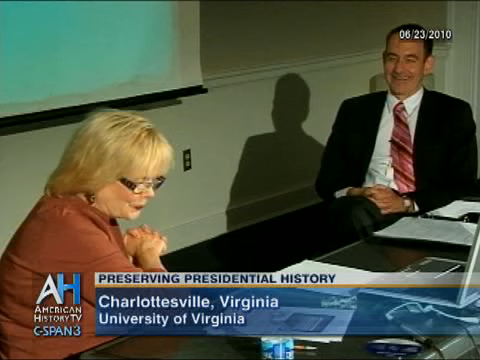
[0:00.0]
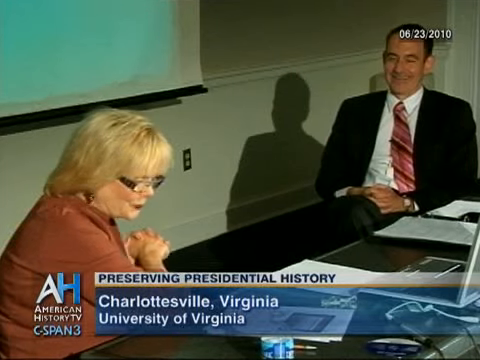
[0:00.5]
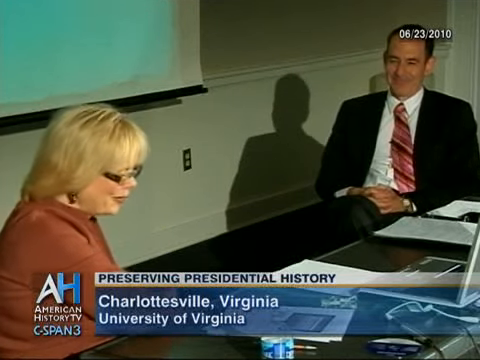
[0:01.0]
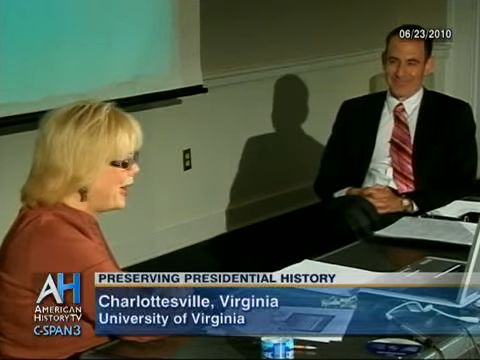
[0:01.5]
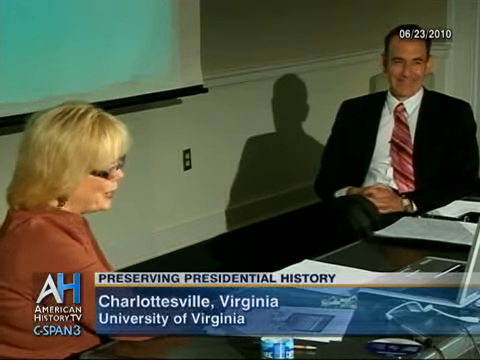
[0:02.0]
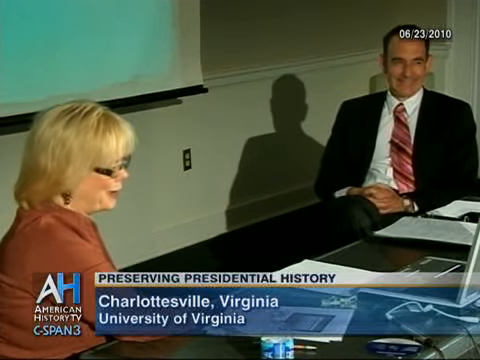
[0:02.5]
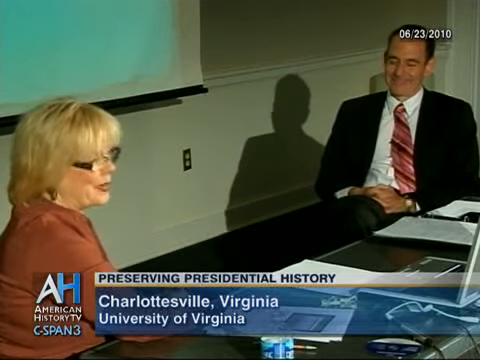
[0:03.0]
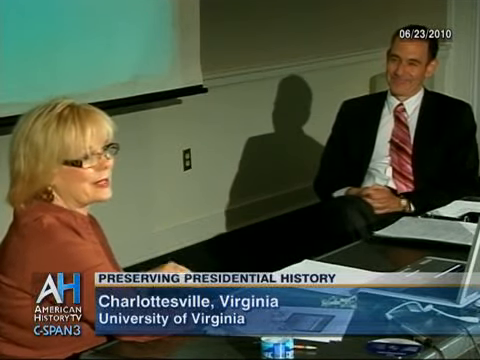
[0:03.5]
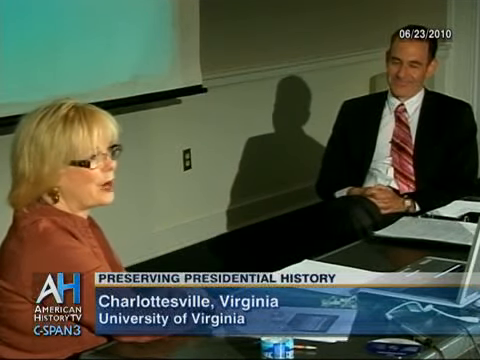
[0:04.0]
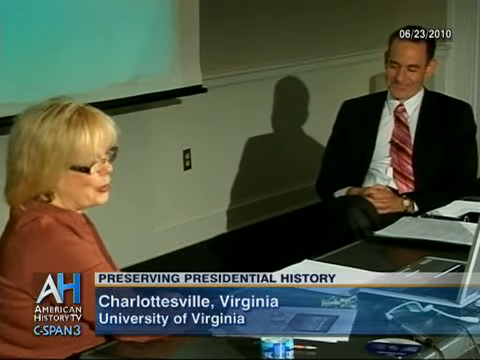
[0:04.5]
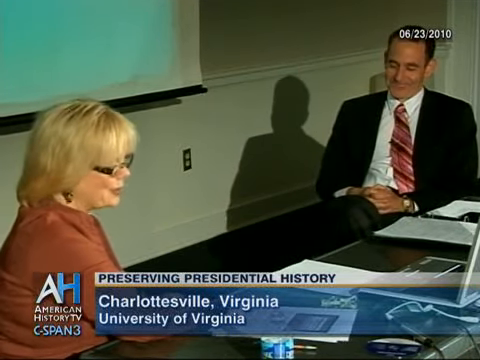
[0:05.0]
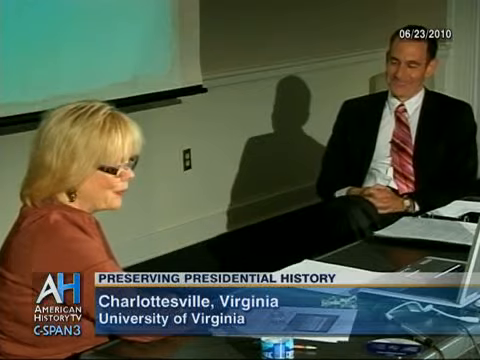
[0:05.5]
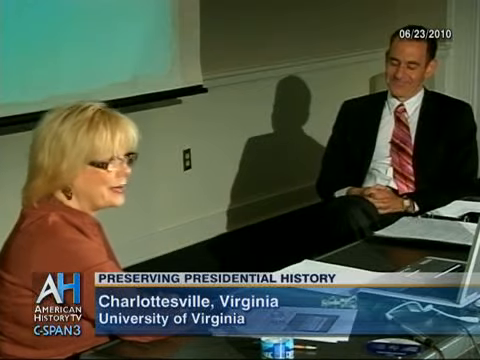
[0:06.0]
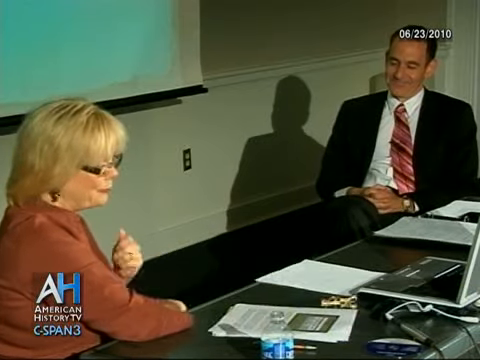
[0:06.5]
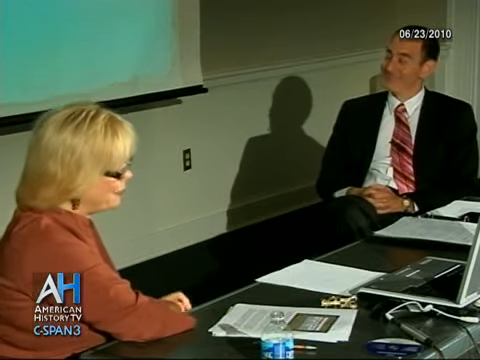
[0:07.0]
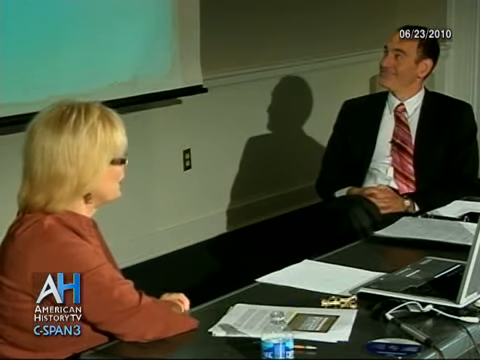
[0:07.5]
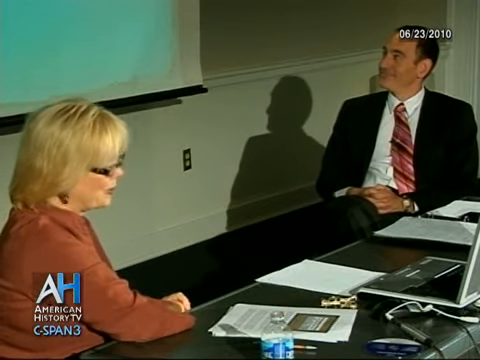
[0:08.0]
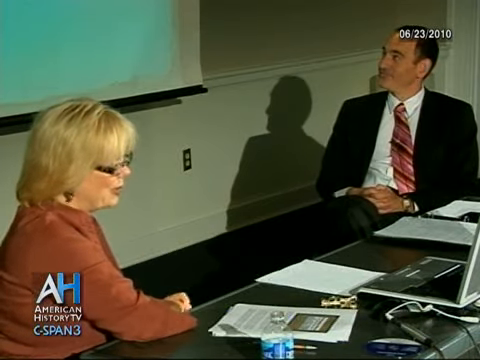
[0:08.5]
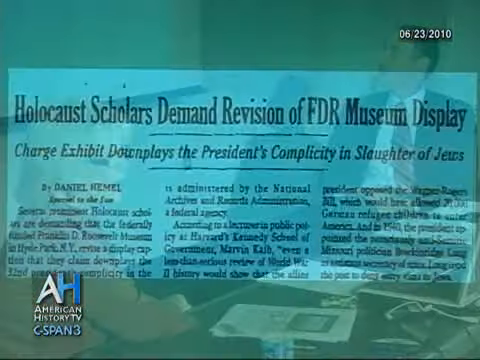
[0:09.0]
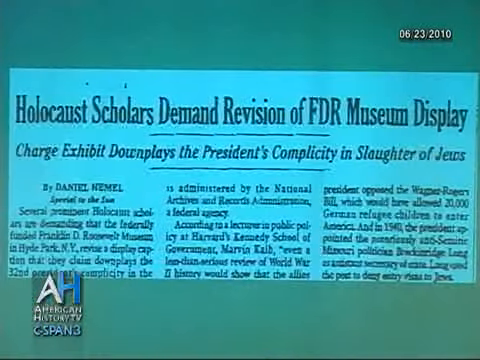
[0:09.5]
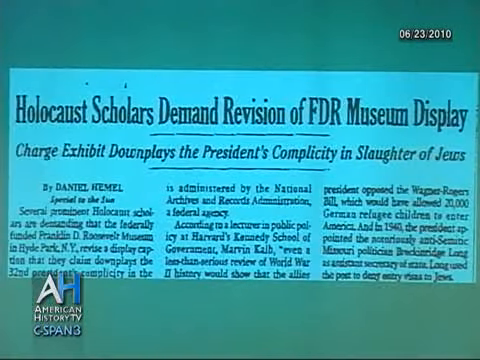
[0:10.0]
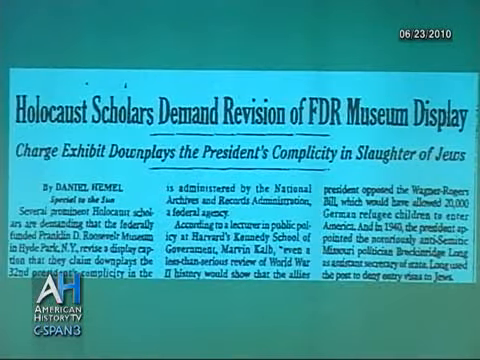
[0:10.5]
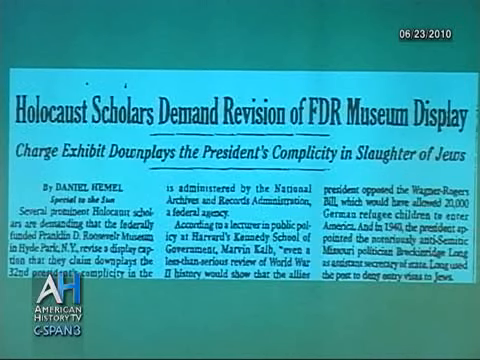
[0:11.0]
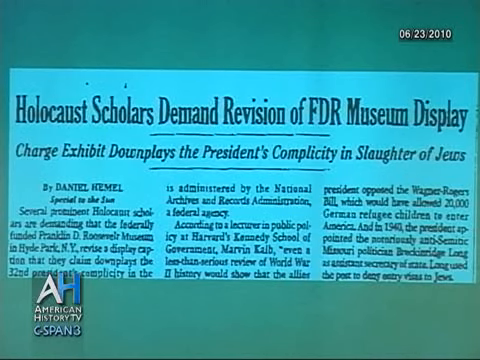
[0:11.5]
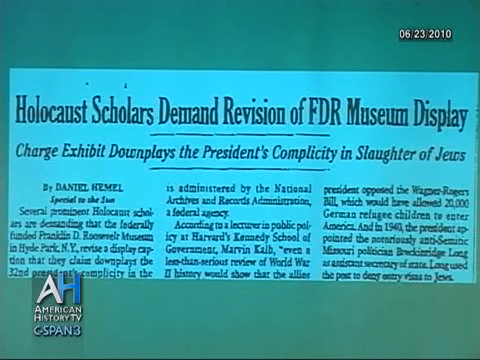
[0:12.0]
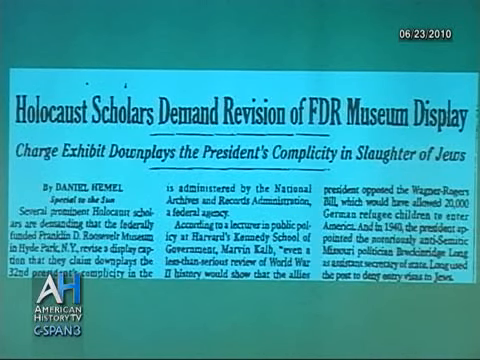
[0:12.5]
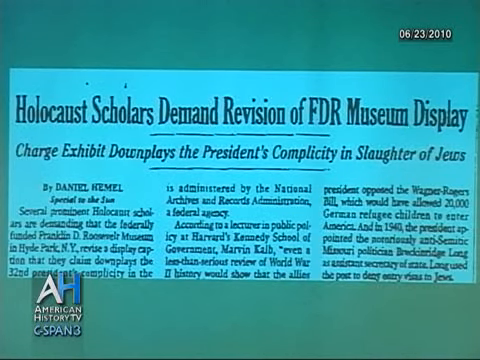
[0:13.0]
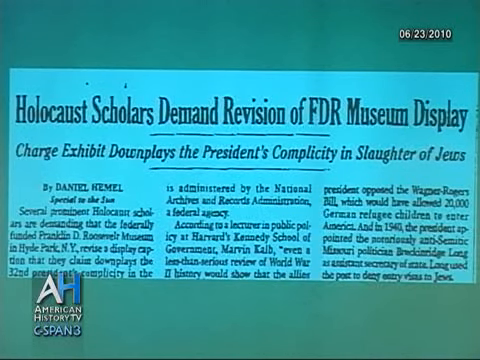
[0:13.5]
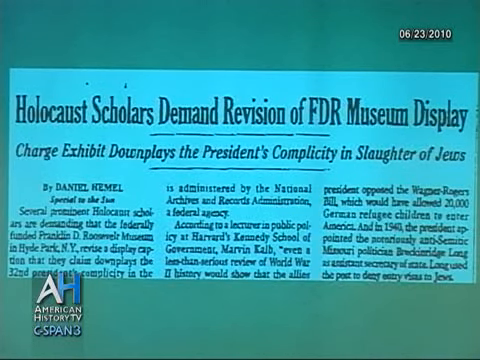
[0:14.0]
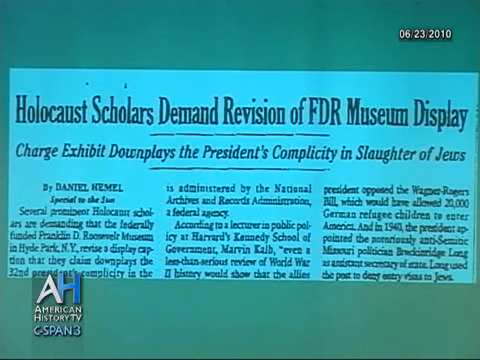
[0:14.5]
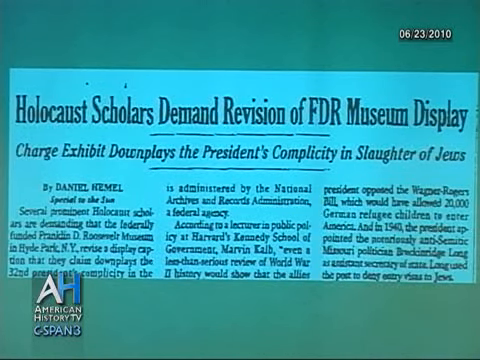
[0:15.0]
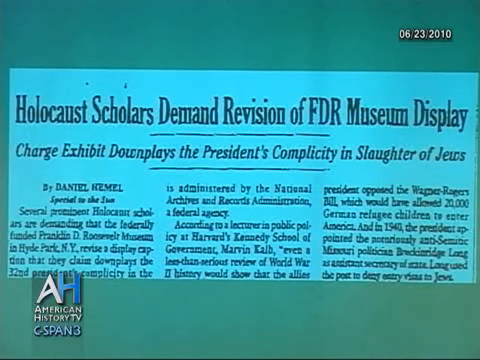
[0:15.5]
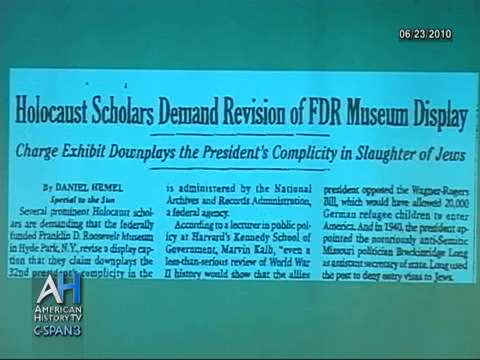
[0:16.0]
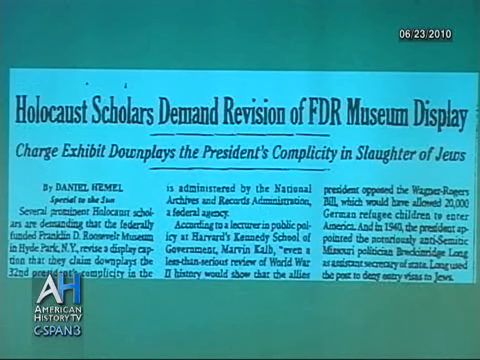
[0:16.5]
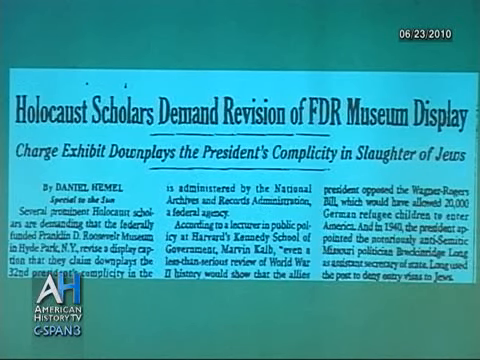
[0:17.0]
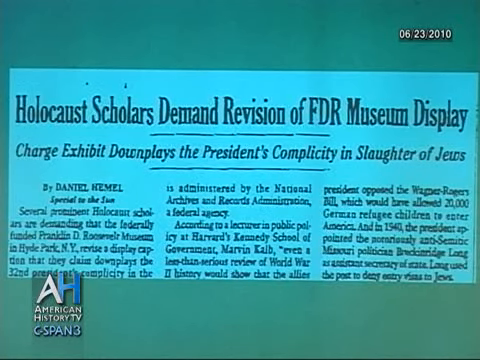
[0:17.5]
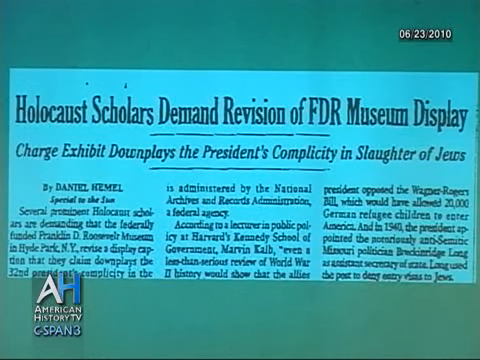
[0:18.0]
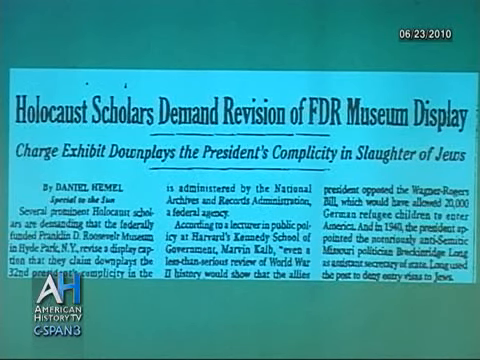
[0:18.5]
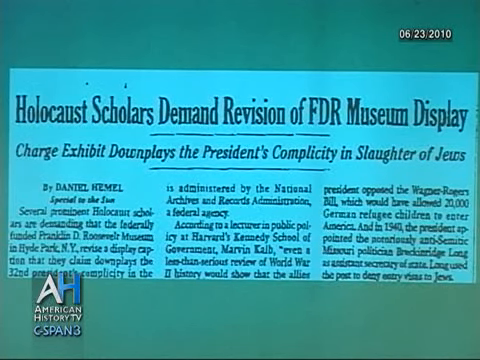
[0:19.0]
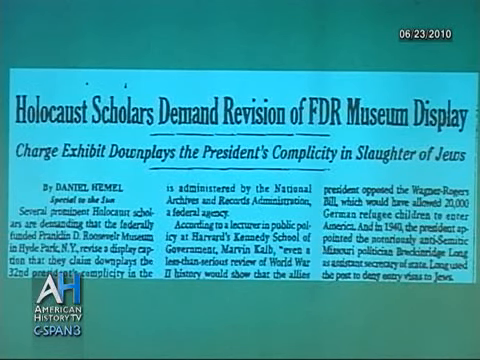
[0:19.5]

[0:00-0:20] The video begins in what looks like an office, with two people having a conversation. In the lower left of the screen is a woman in a kind of salmon-colored long-sleeve top. She is sitting down and has glasses and blonde hair; she is middle-aged. In the upper right is a man facing her and smiling. He wears a dark suit and a striped pink and purple tie, and his legs are crossed. In the upper left is a screen against the wall for slideshow projections. In the lower right is the table they are sitting at, which has a laptop and some papers on it. The woman is talking: her mouth opens and her hands move around a little. The man stares at her, smiling and nodding, and at one point turns to the right and looks at the screen. The video then cuts to a completely different screen: a cutout image of a newspaper with the headline "Holocaust Scholars Demand Revision of FDR Museum Display." It shows the upper part of an article on that topic, not the entirety. In the upper right of the image the date 06-23-2010 is given, and in the lower left is a logo that says "American History TV, C-SPAN 3". The newspaper article is held on the screen for several seconds.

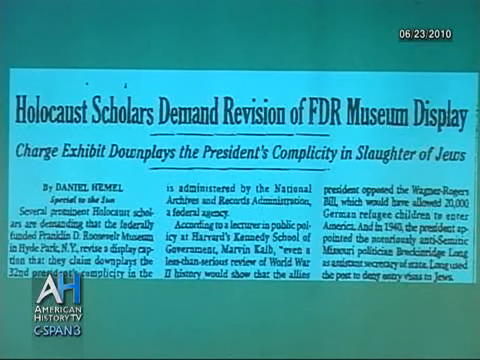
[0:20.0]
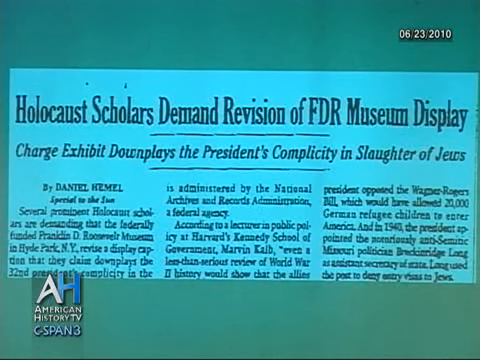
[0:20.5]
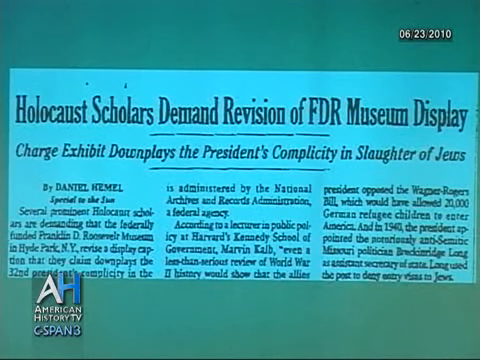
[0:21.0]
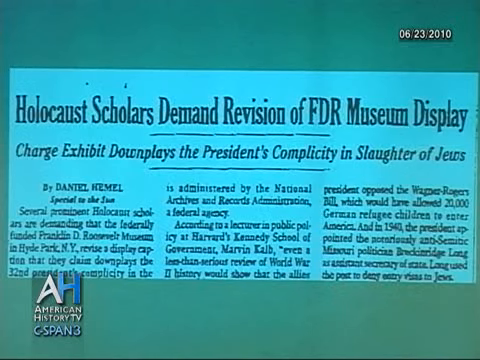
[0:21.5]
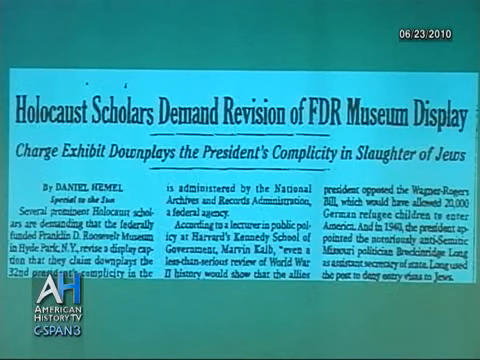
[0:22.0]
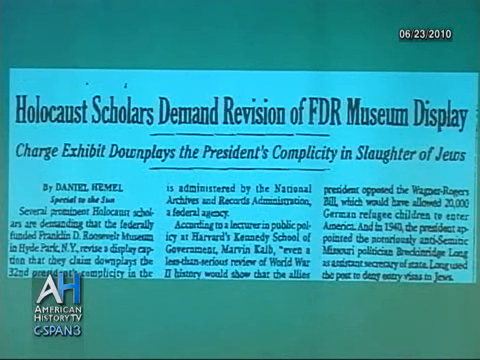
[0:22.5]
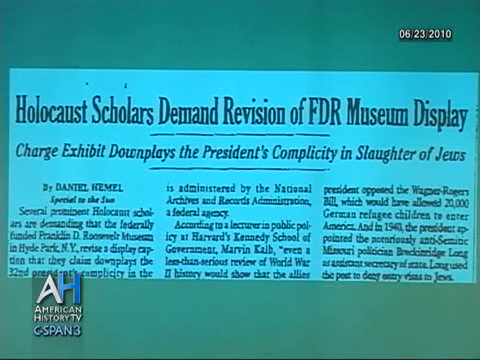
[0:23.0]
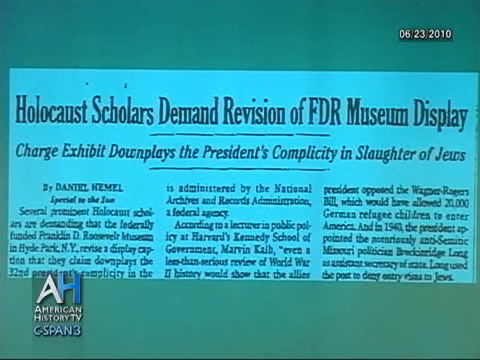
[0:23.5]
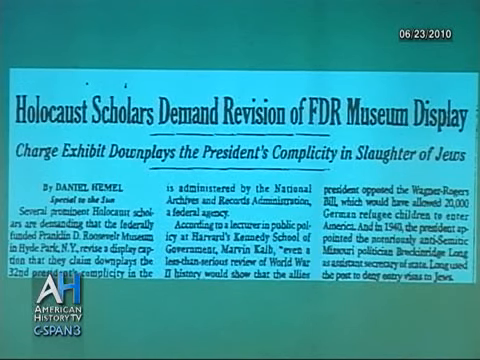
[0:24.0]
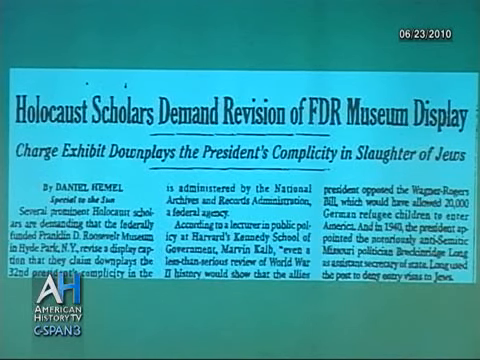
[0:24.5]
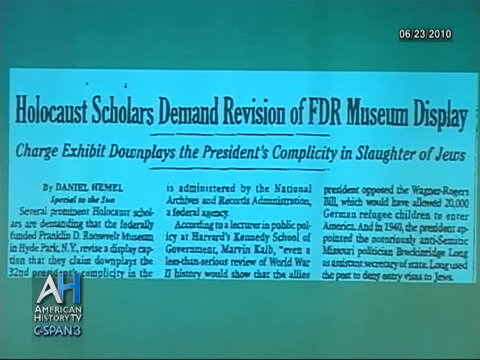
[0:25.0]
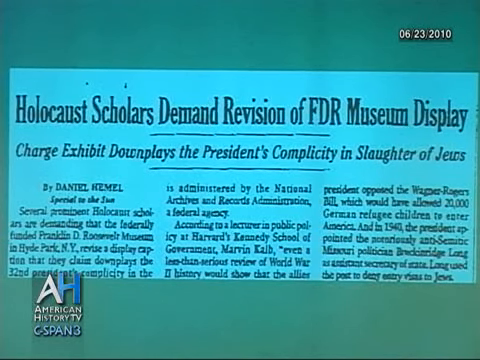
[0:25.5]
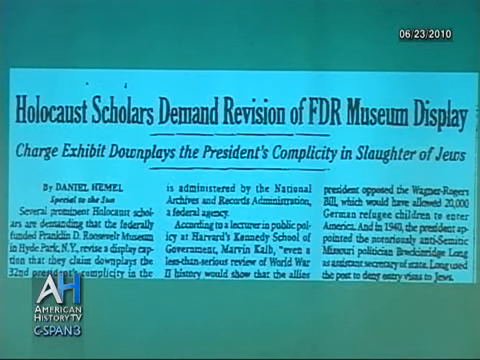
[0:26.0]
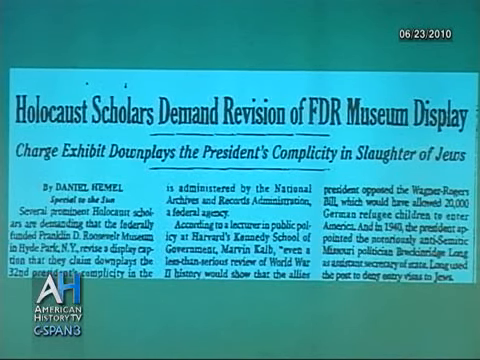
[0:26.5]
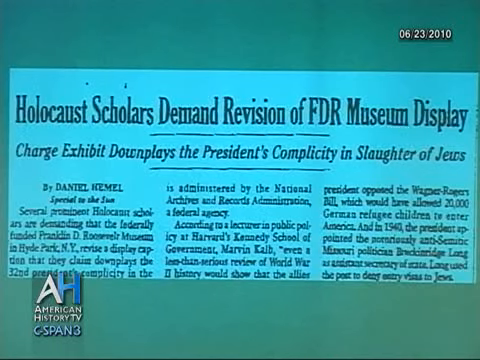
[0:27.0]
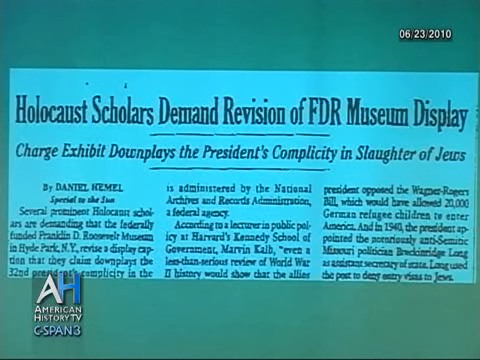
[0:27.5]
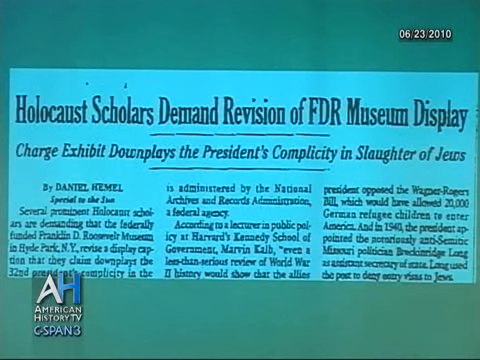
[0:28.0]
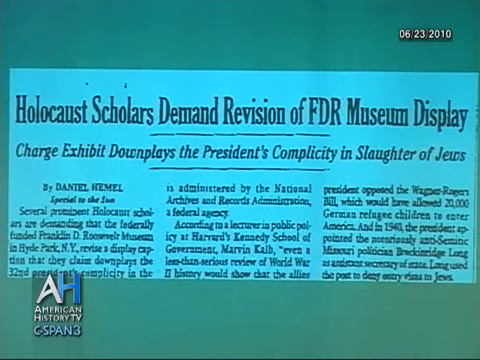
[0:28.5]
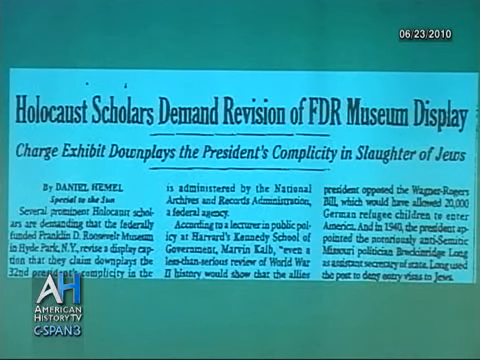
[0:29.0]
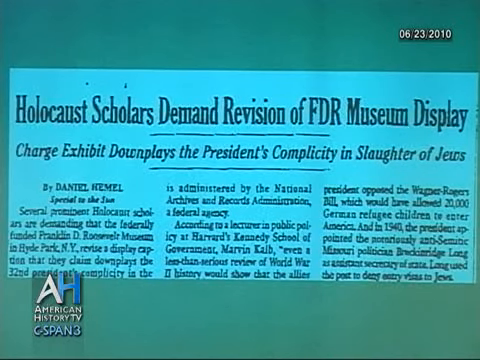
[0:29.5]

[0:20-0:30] The newspaper article remains on the screen. A sub-header in smaller italic text reads "Charge Exhibit Downplays the President's Complicity in Slaughter of Jews". The American History logo stays in the lower left and the date in the upper right. The article's byline names Daniel Hemel, with his name in all caps. Below are three columns of text, cut off at the bottom, so the whole article is not visible. The paper is not completely white; it has a kind of greenish tint, suggesting it is apparently being displayed on the screen the people are looking at.